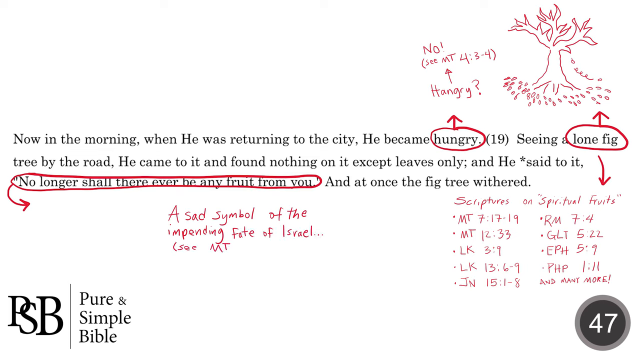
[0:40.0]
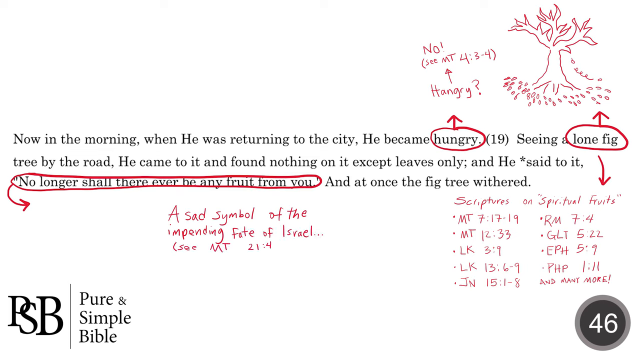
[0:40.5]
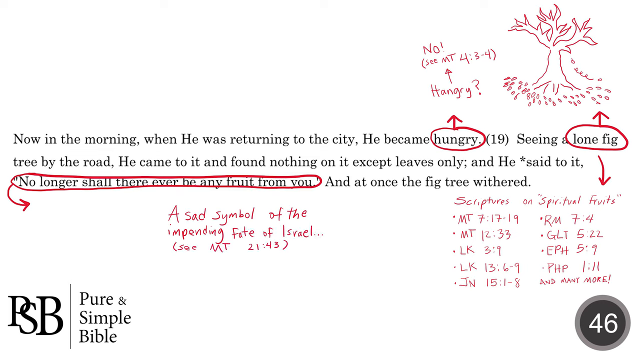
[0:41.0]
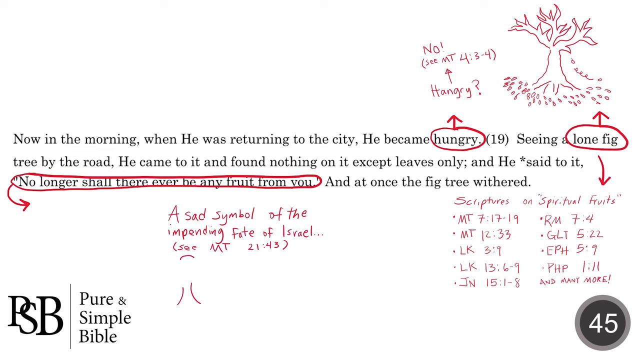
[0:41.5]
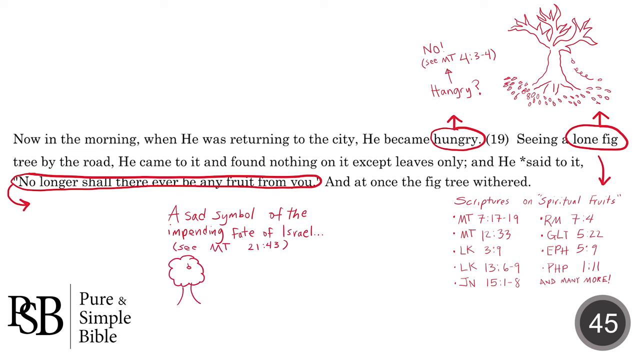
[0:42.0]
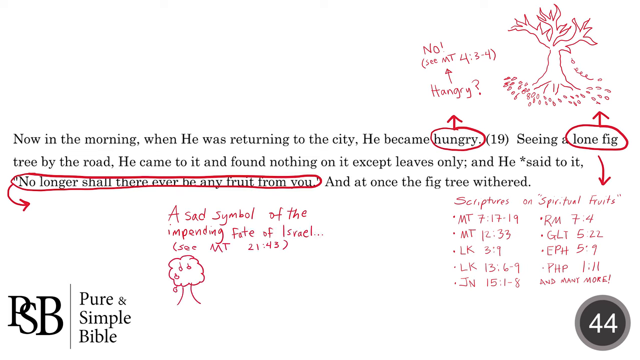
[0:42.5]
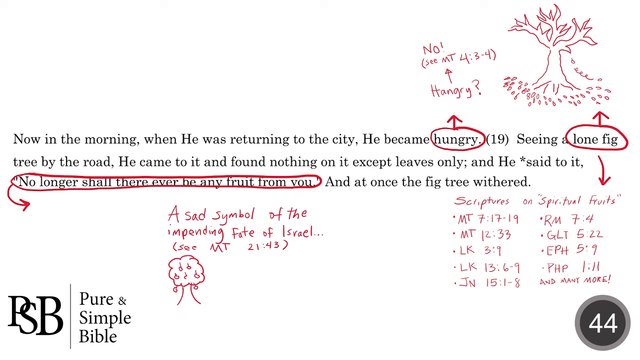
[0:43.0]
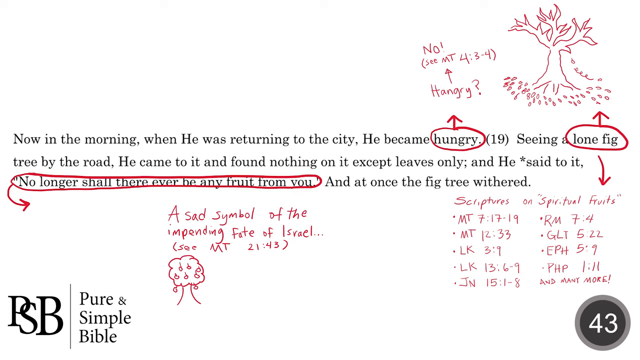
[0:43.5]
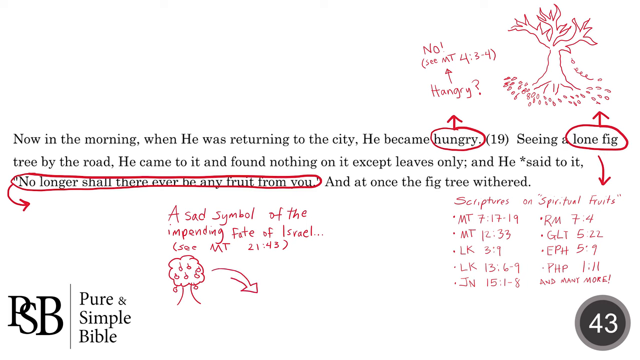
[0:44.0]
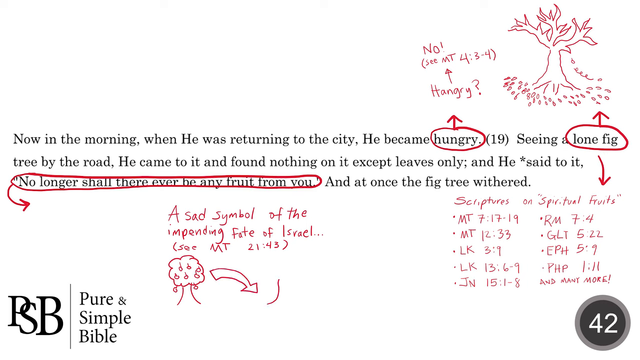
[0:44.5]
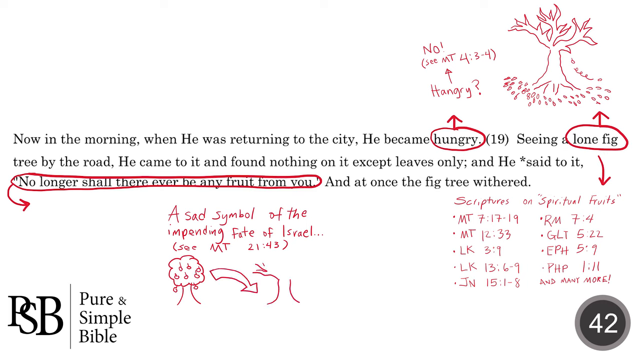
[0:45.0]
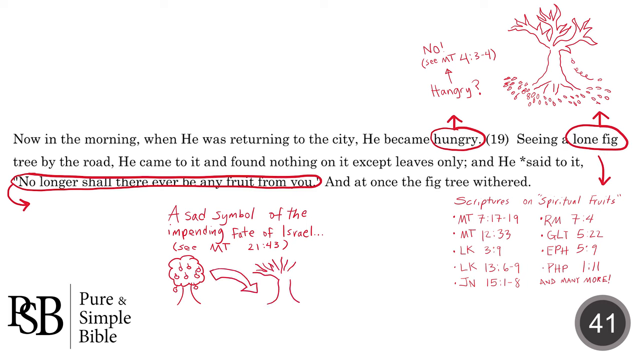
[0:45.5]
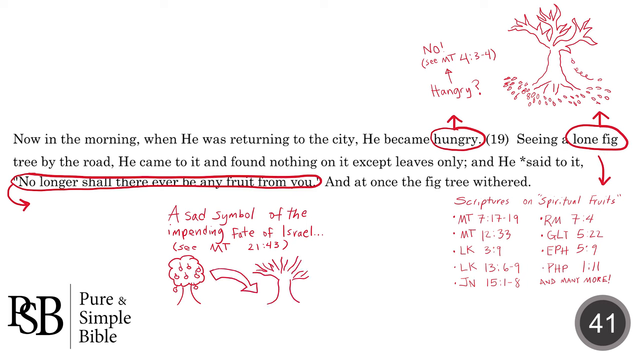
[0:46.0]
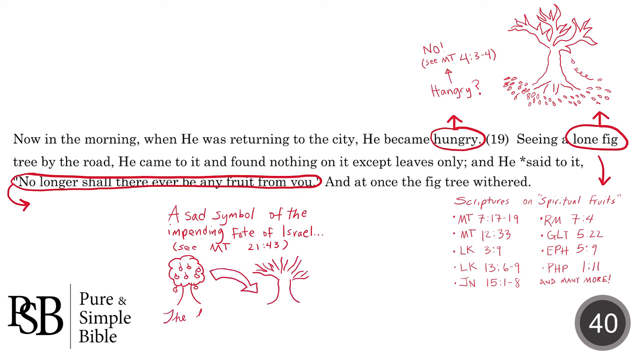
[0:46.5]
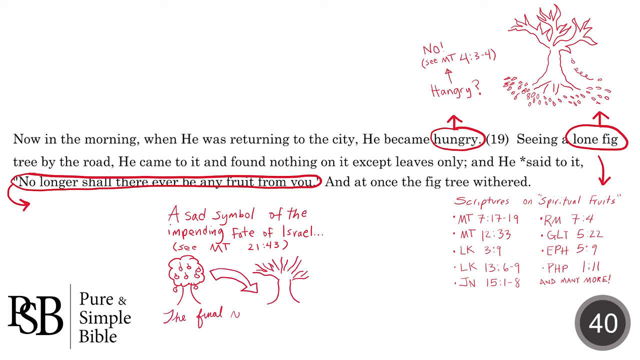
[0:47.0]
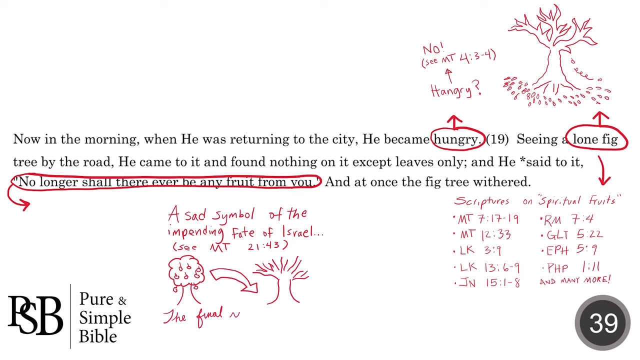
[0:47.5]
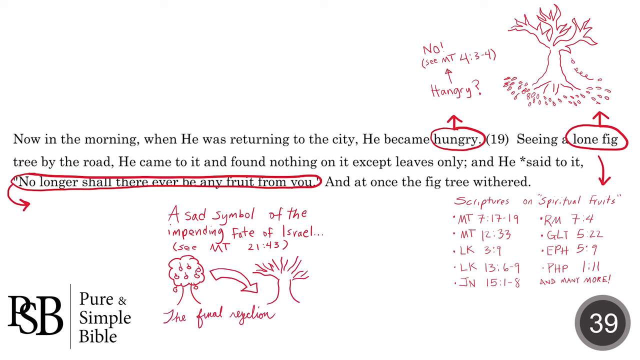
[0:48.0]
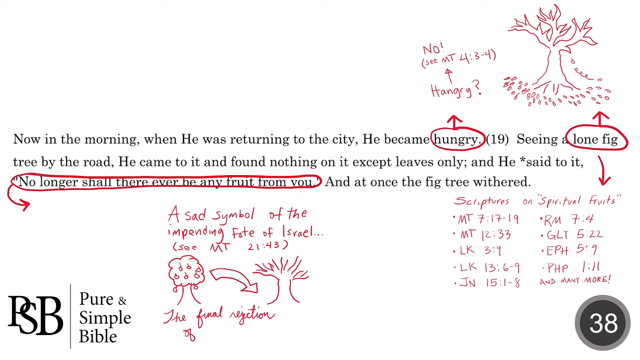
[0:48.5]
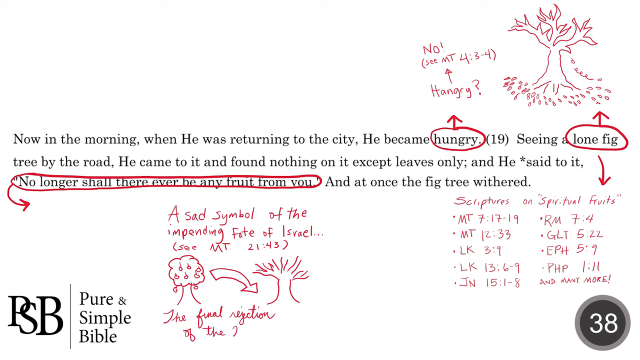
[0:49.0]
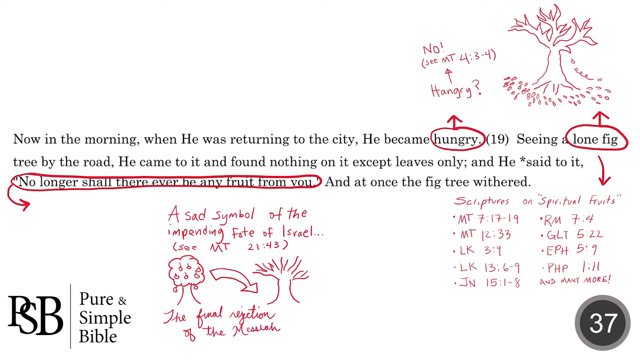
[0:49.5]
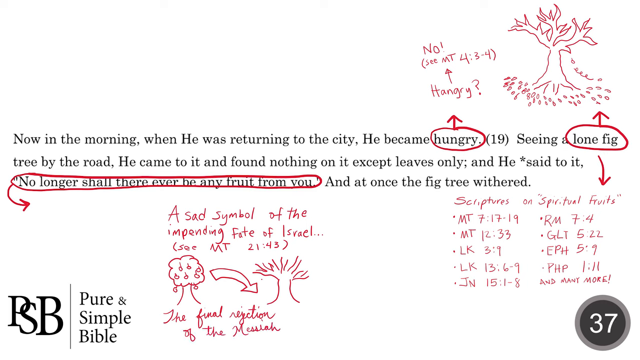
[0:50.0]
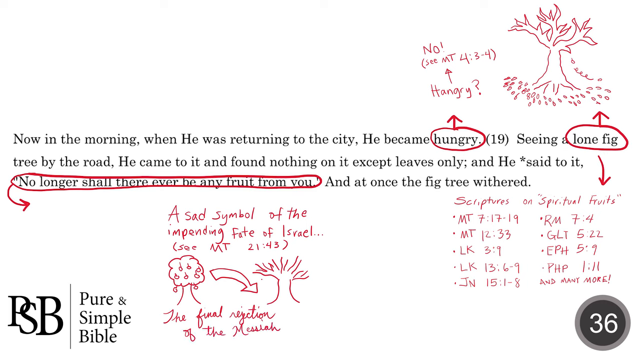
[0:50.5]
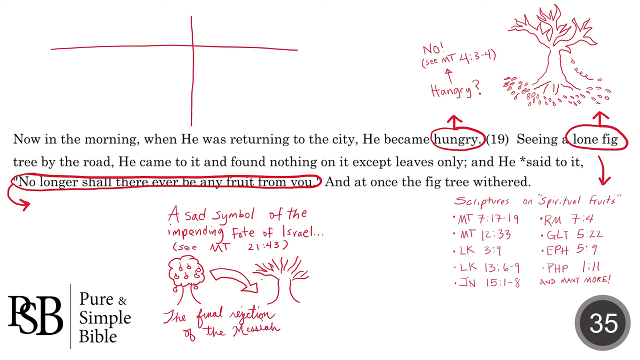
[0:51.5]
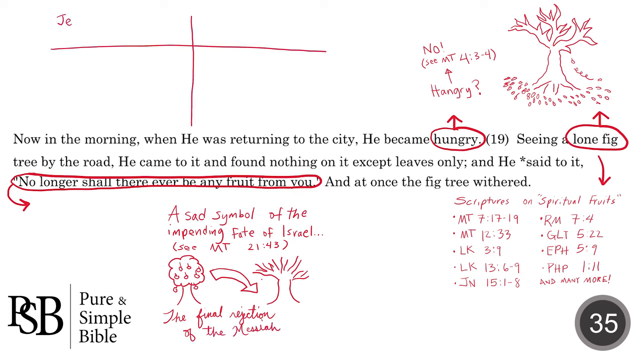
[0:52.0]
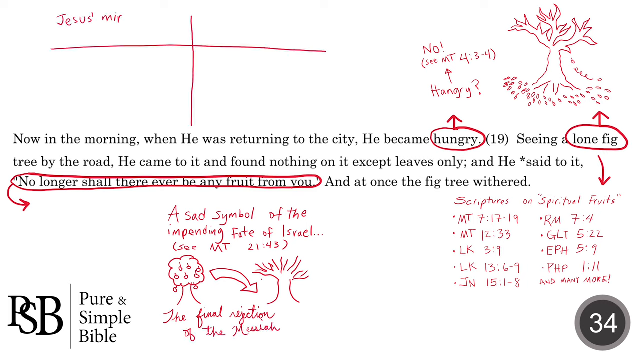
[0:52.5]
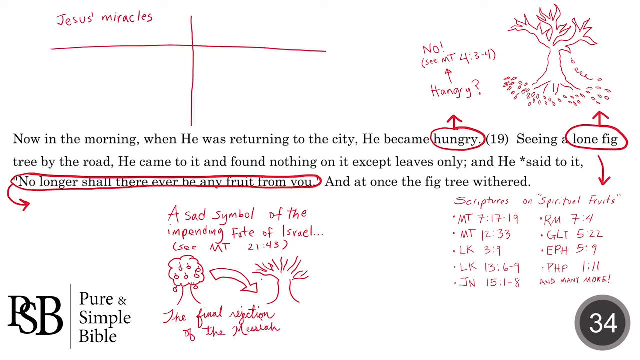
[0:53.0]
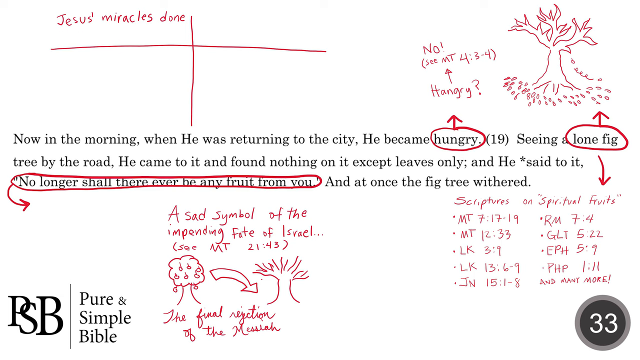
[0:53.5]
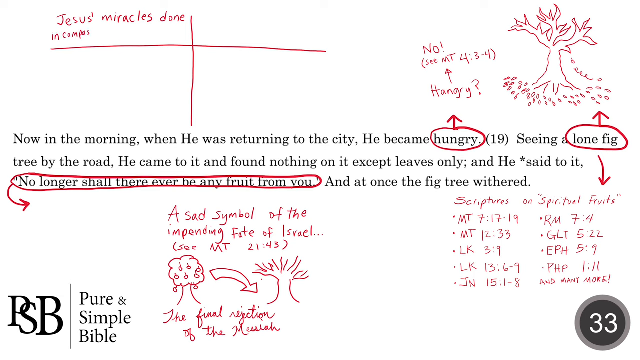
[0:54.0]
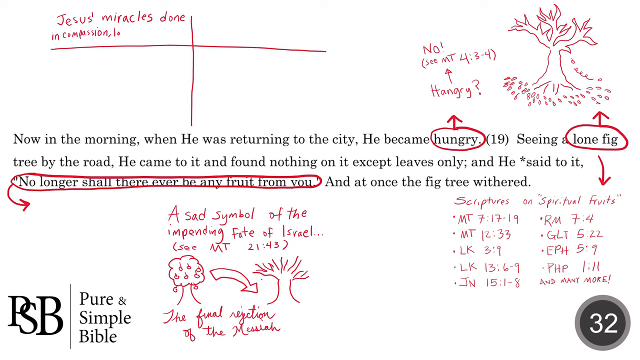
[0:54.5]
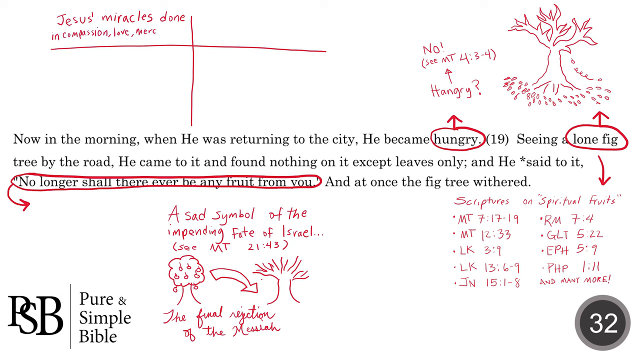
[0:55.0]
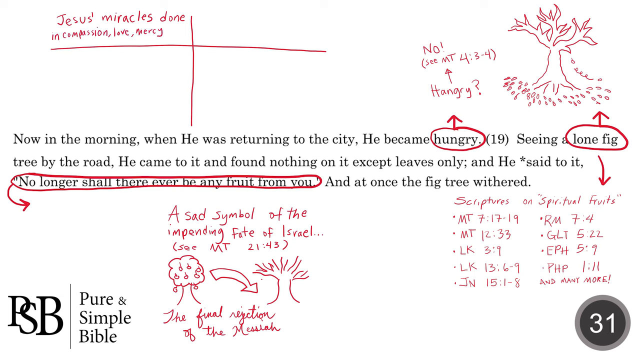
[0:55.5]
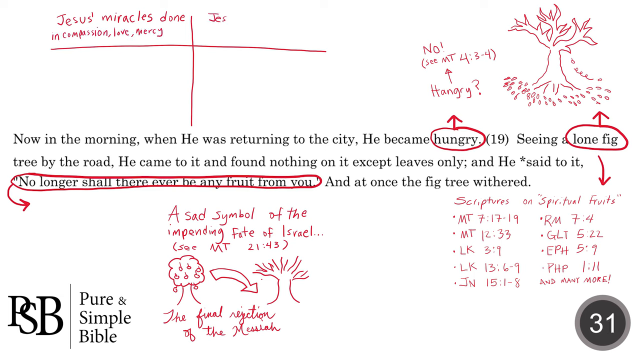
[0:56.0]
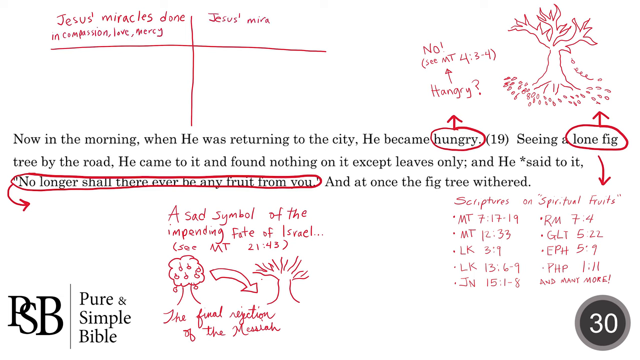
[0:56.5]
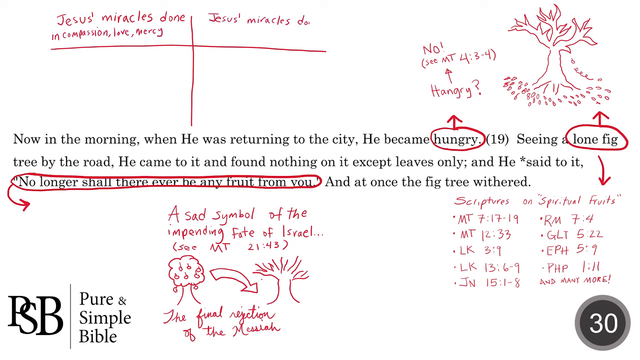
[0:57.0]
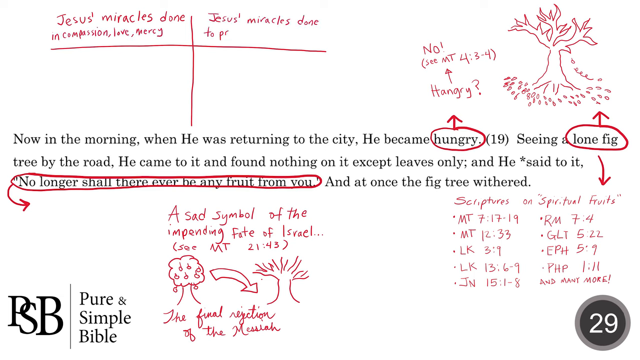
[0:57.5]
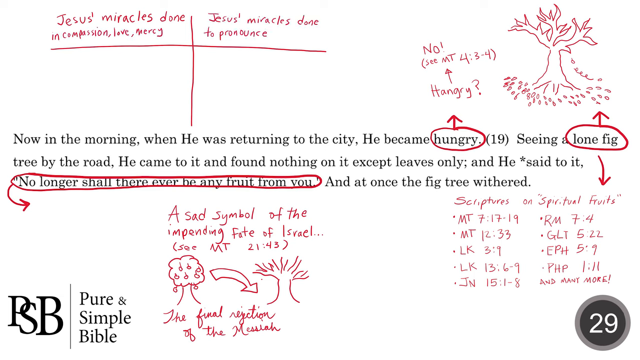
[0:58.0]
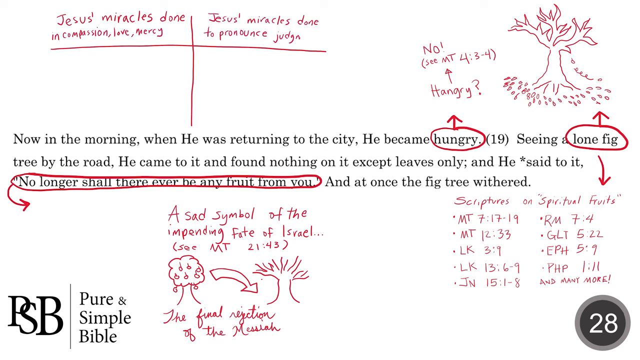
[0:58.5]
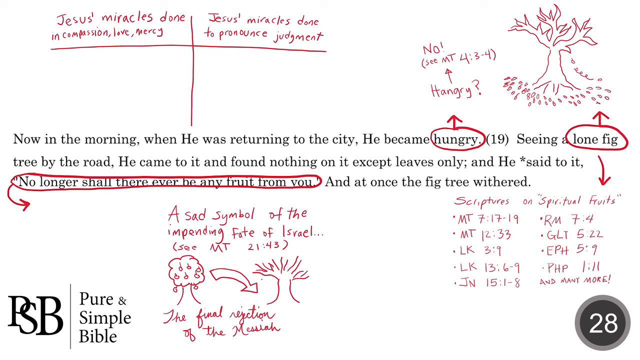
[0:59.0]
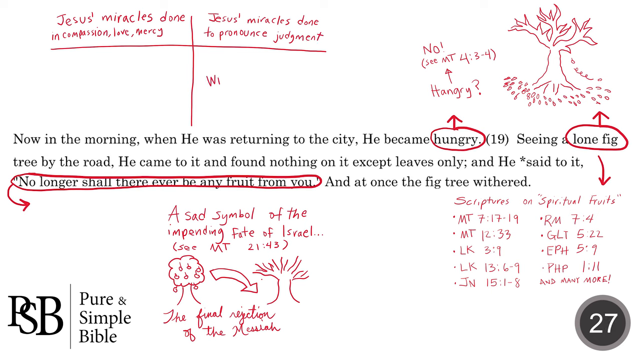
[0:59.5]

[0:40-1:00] The person continues annotating the scripture on the screen while a counter in the bottom right corner counts seconds. By "lone fig", scripture references on spiritual fruits are written: Matthew 7, 17 to 19, Matthew 12, 33, Luke 3, 9, Luke 36 to 9, Romans 7, 4, Galatians 5, 22, Ephesians 5, 9, Philippians 1, 11, John 15, 1 to 8, and many more. Another sentence is circled: "no longer shall there ever be any fruit from you." Notes are added for it, including "a sad symbol of the impending fate of Israel", and two trees are drawn: one with fruits or leaves and another with nothing.